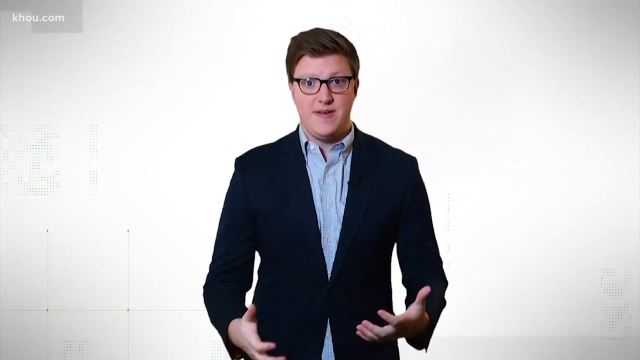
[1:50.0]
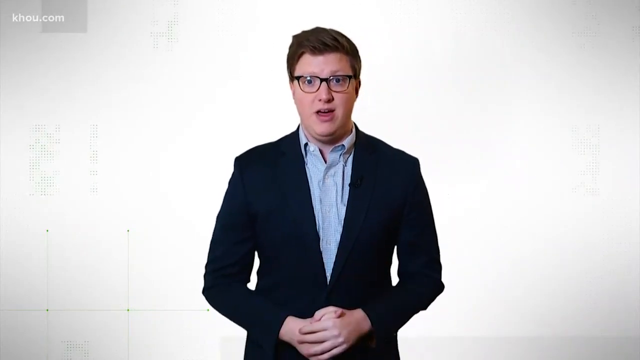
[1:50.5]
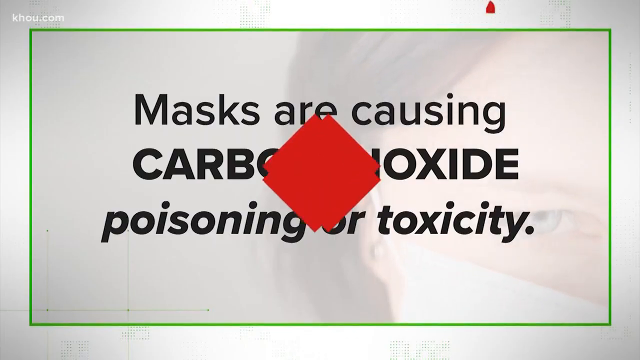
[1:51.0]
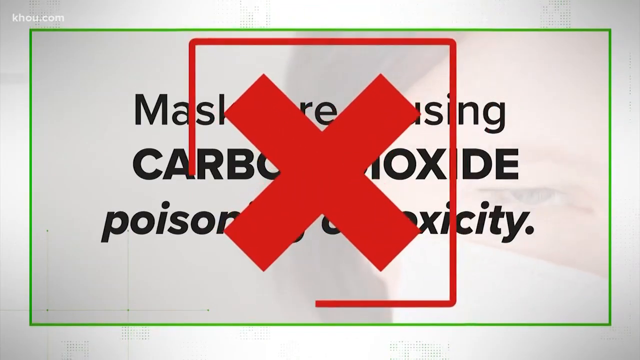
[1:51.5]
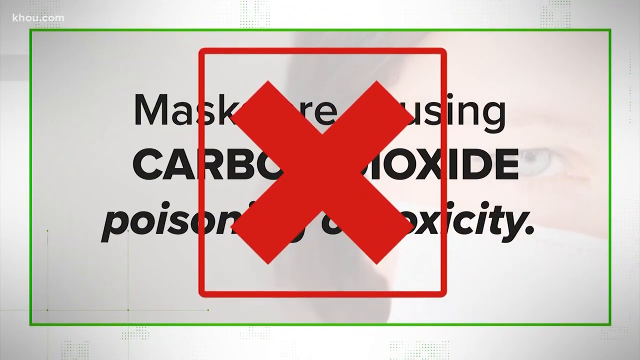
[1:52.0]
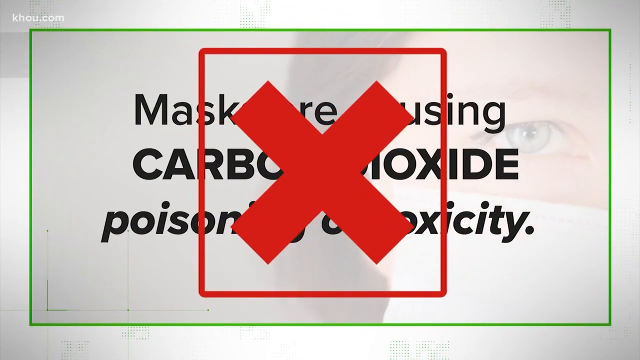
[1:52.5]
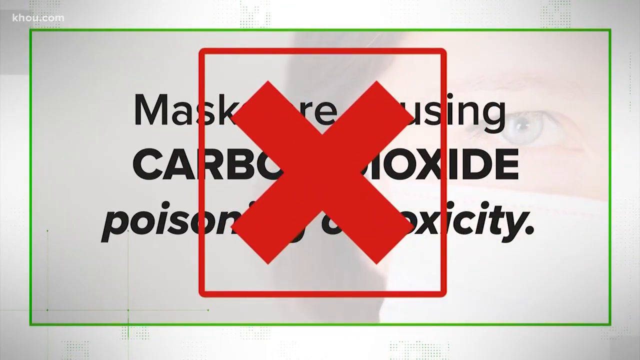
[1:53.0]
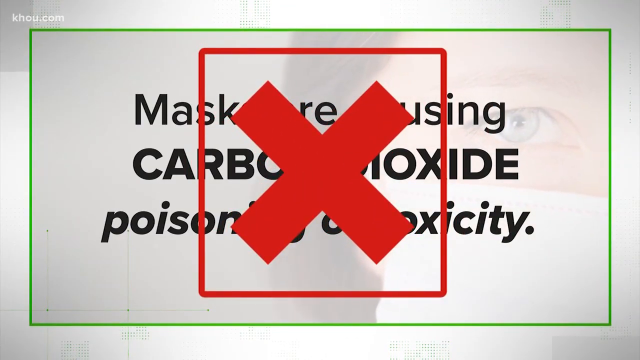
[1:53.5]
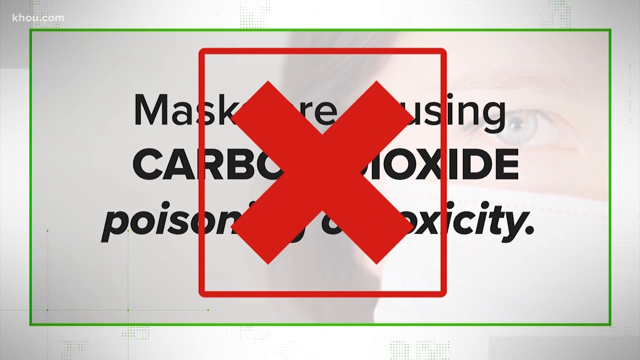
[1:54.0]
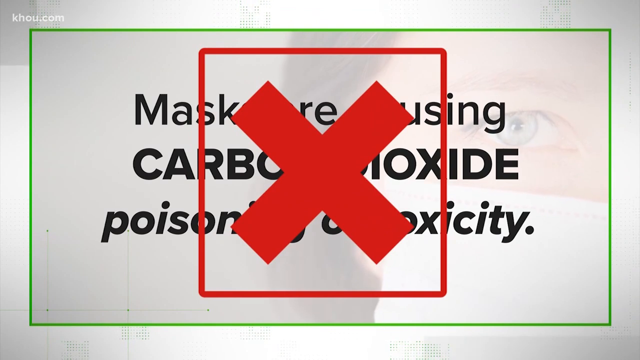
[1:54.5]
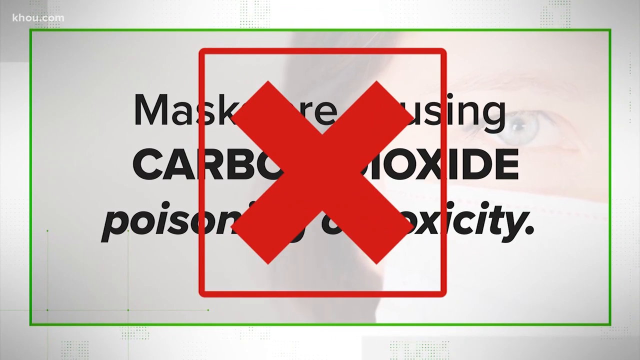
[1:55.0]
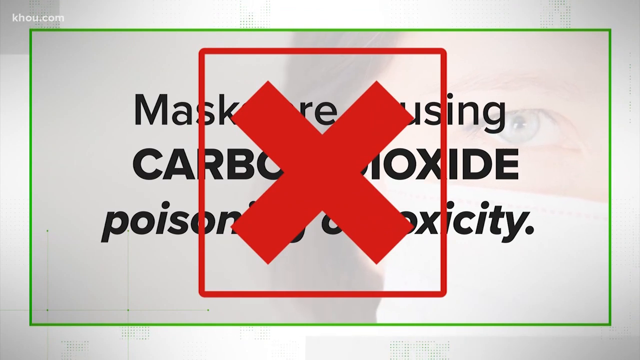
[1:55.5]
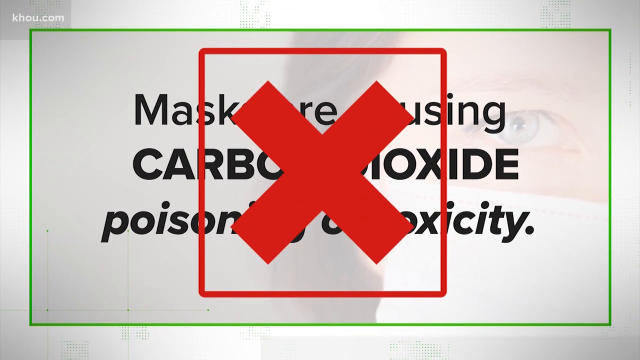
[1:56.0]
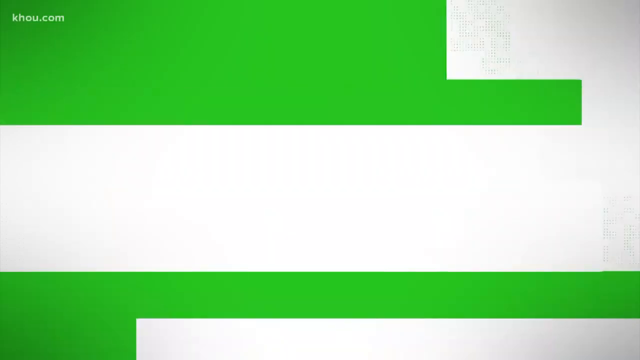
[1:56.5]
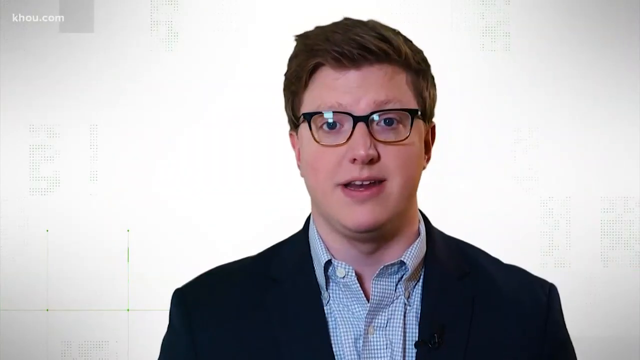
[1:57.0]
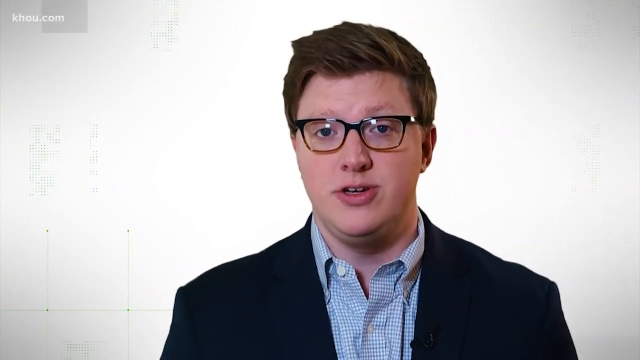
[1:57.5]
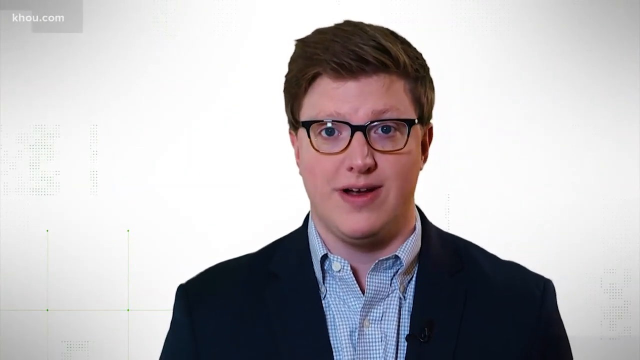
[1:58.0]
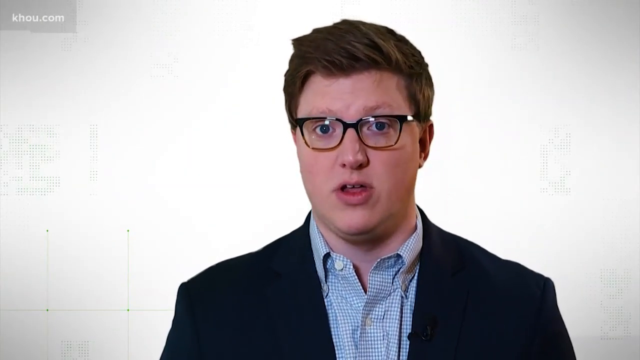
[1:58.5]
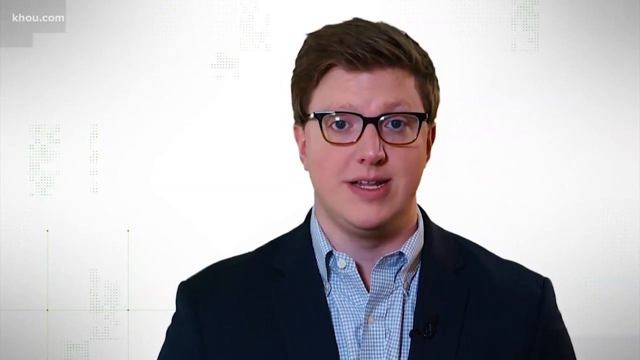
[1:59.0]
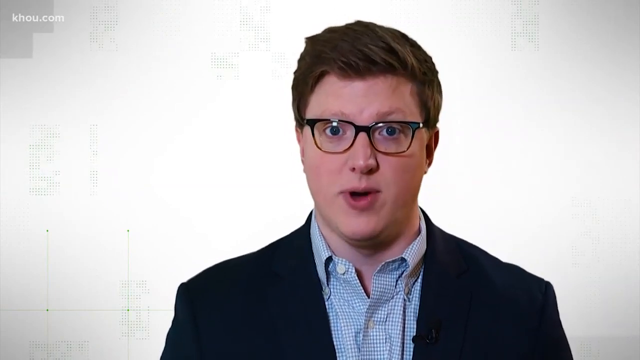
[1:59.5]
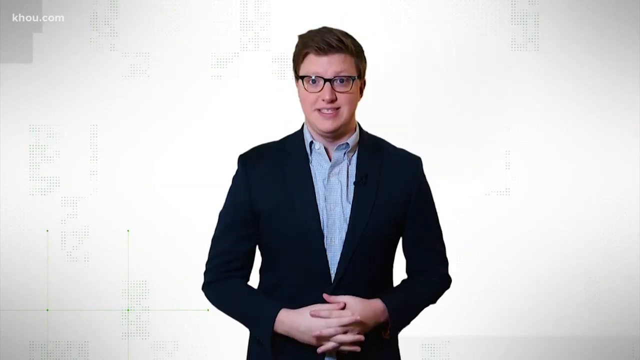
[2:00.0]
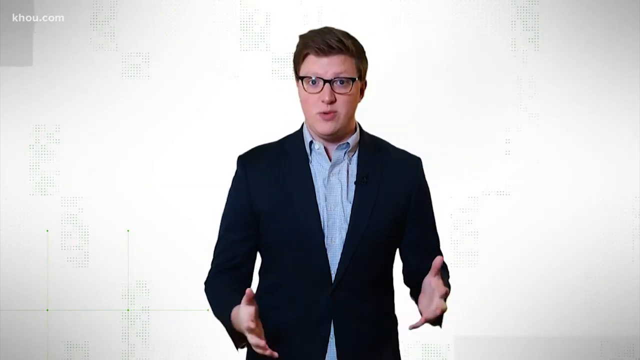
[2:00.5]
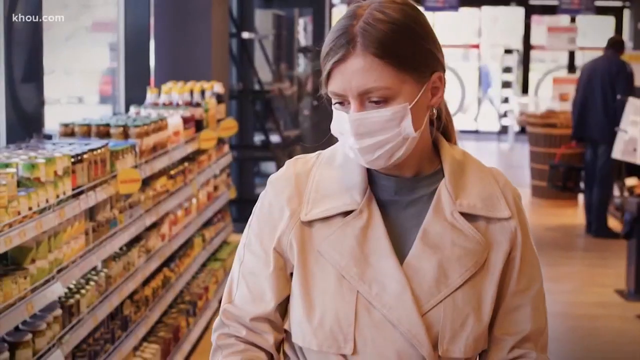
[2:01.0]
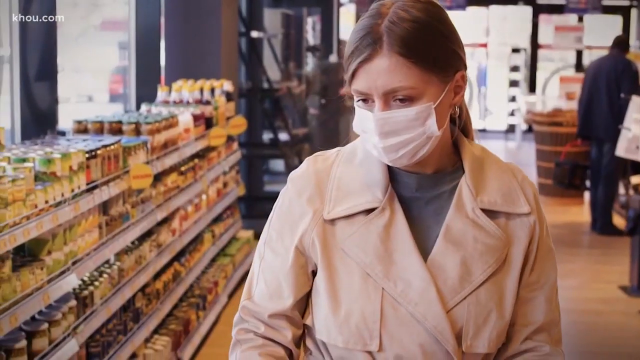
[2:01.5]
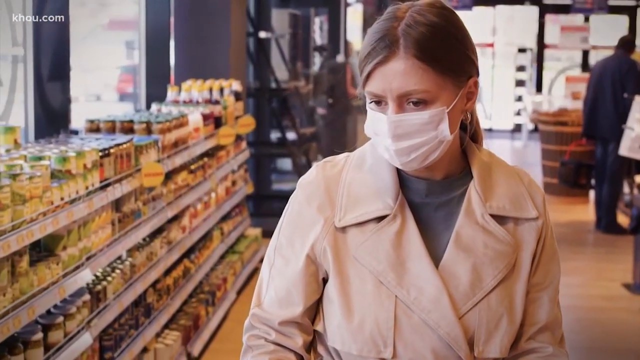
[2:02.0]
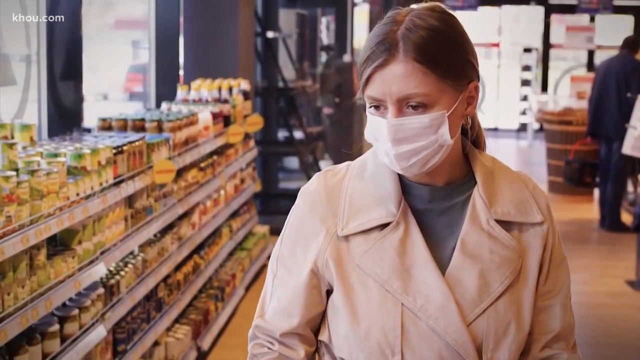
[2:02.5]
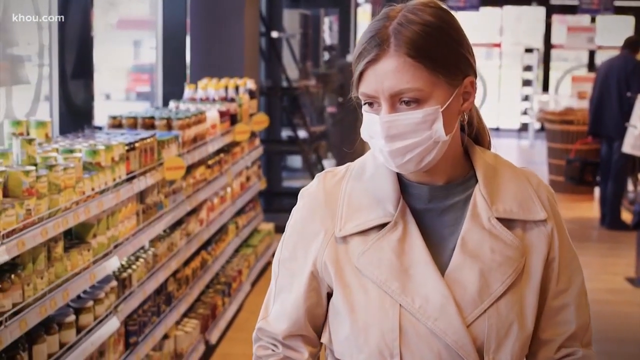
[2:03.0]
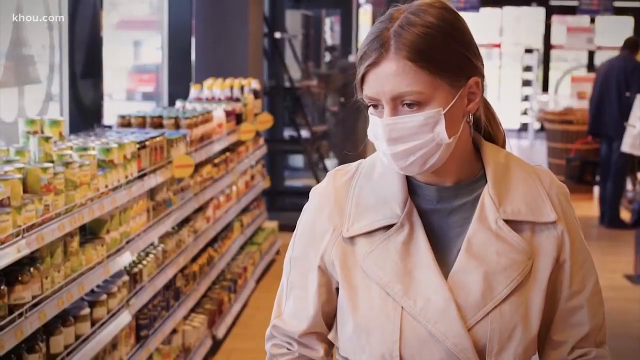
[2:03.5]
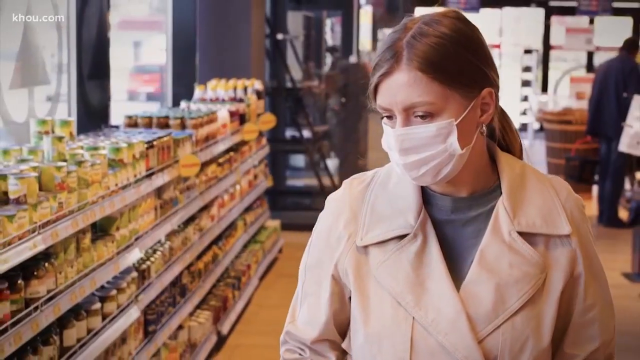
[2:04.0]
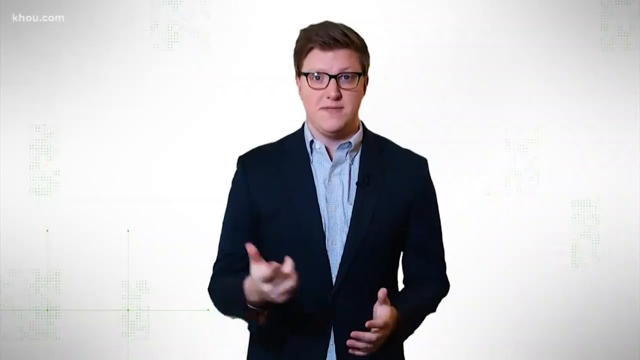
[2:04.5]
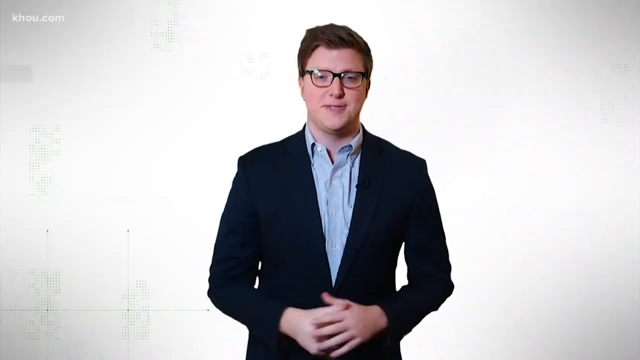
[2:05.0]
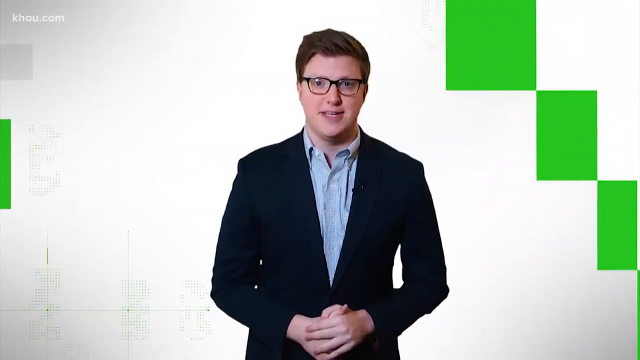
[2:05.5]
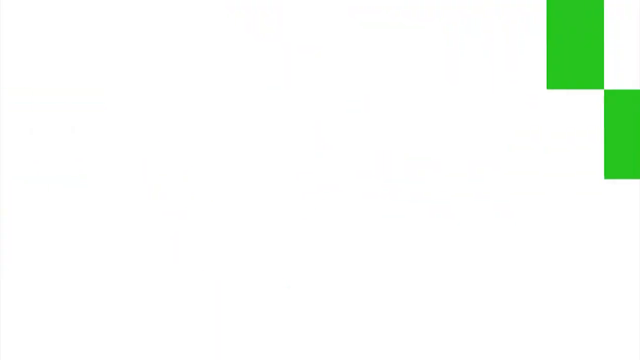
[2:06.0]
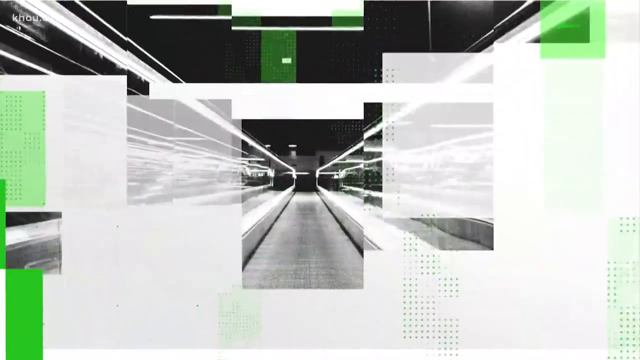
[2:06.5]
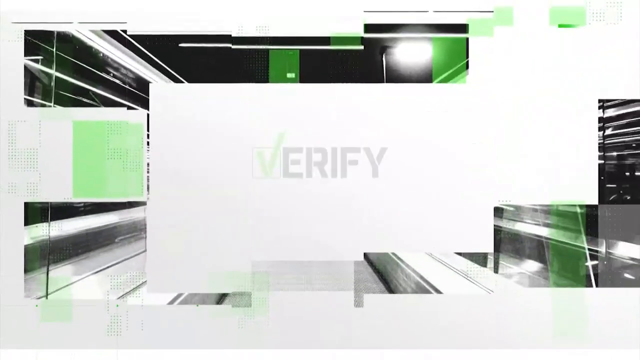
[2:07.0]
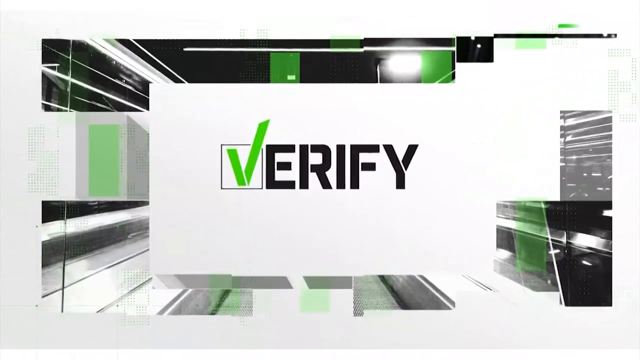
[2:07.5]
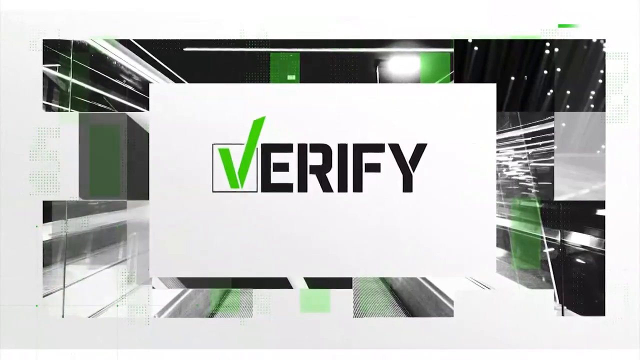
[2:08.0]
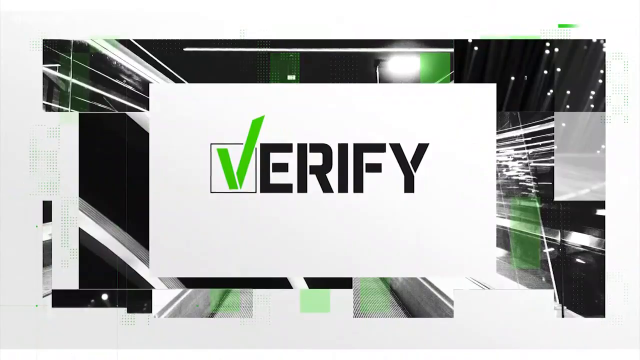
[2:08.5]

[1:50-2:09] Black text about masks appears on the screen with a green border. A large red cross with a red box around it then appears over the text, and in the quite transparent background somebody's eye is visible. The video cuts back to the presenter, showing his head and shoulders before zooming out to show his full top half with his hands interlaced together. He takes his hands apart to gesture before the video cuts to a woman in her 30s or 40s in a supermarket, wearing a white mask and looking down the aisles at the various products on the shelves. The video cuts back to the presenter in the studio speaking, and the Verify logo comes back up on the screen to conclude the video.